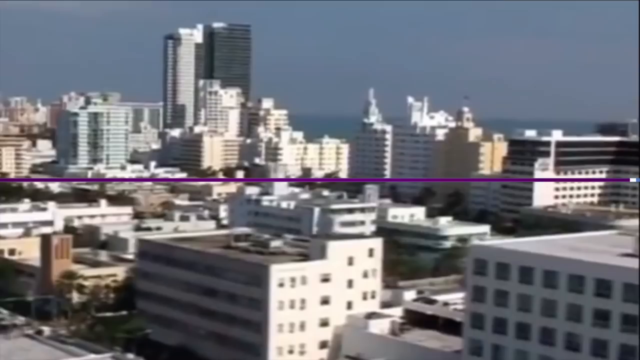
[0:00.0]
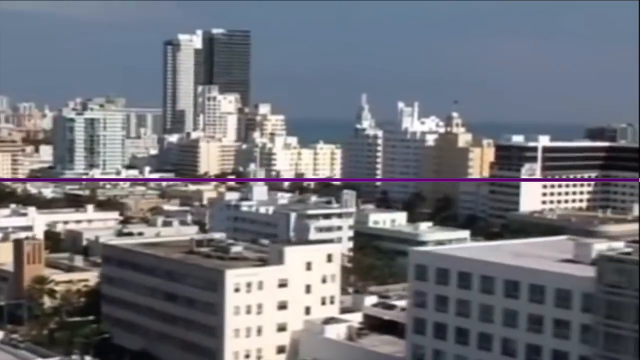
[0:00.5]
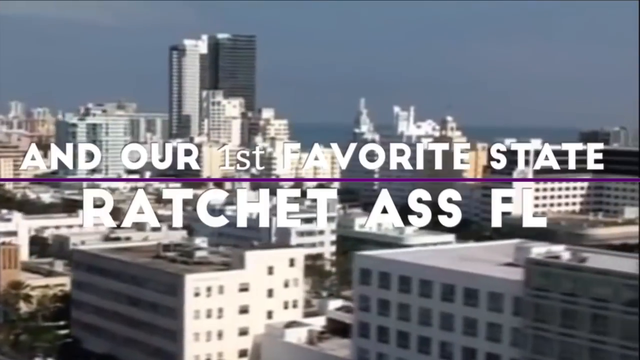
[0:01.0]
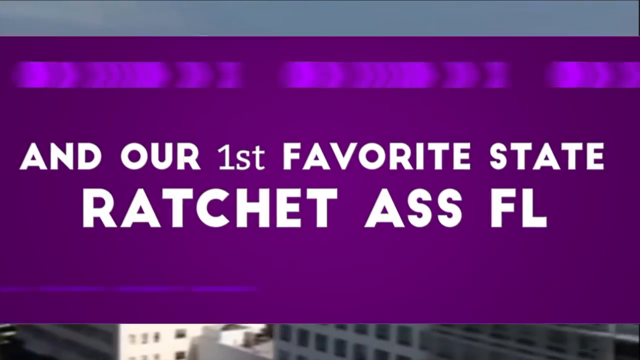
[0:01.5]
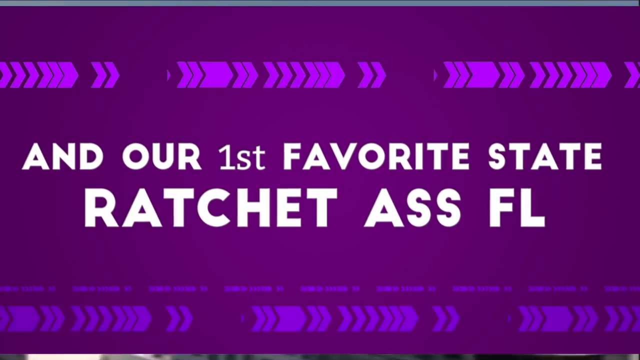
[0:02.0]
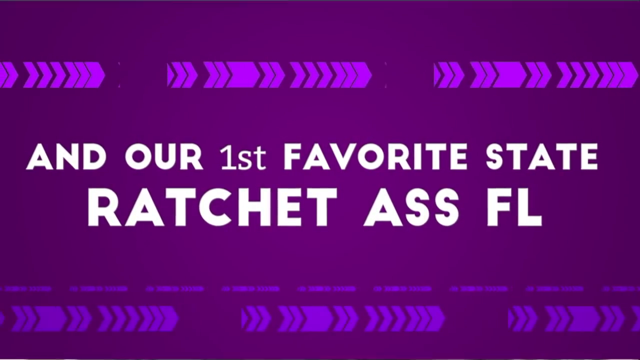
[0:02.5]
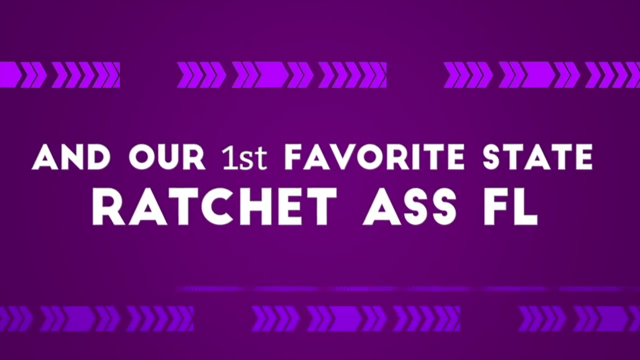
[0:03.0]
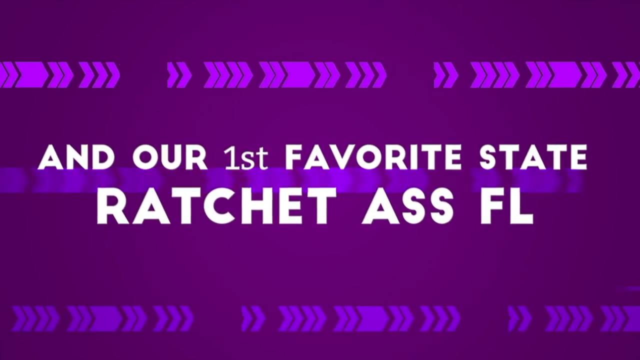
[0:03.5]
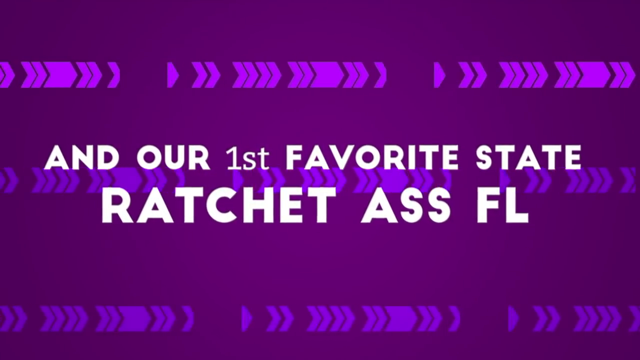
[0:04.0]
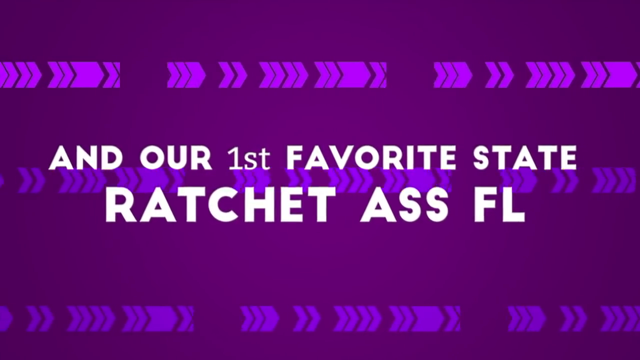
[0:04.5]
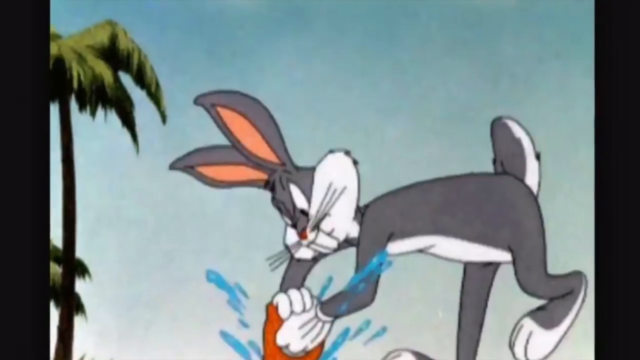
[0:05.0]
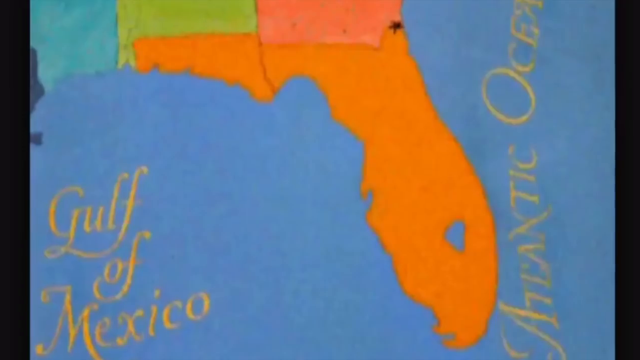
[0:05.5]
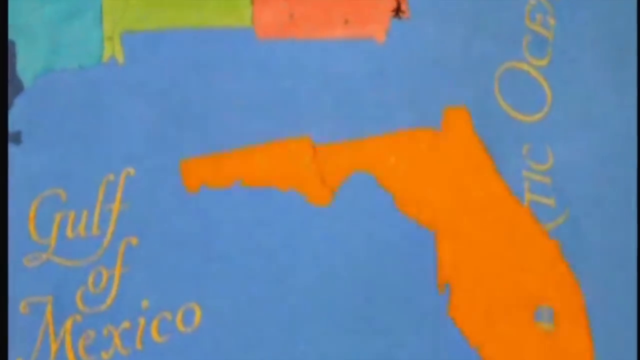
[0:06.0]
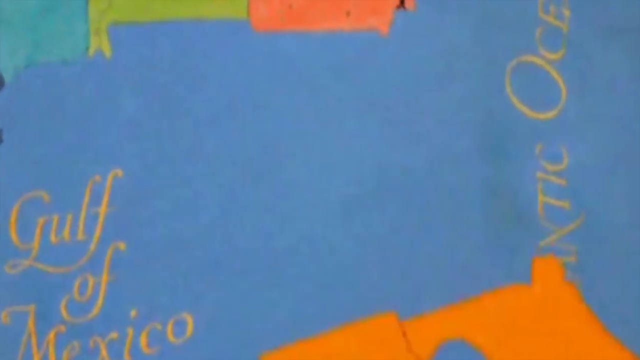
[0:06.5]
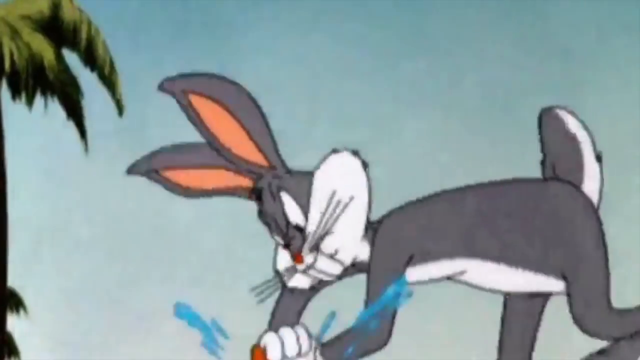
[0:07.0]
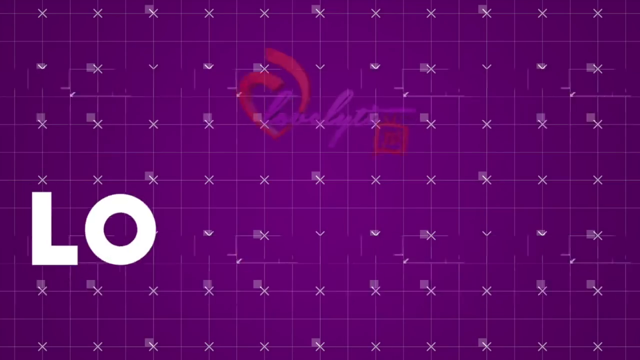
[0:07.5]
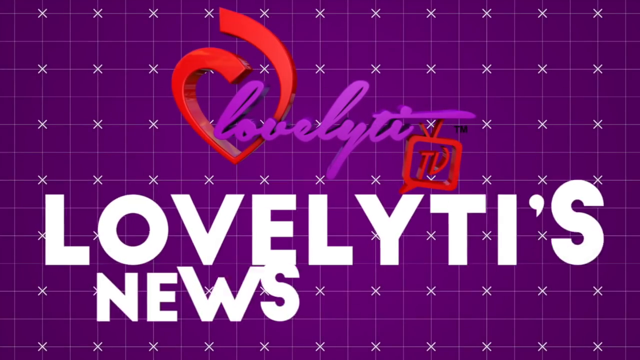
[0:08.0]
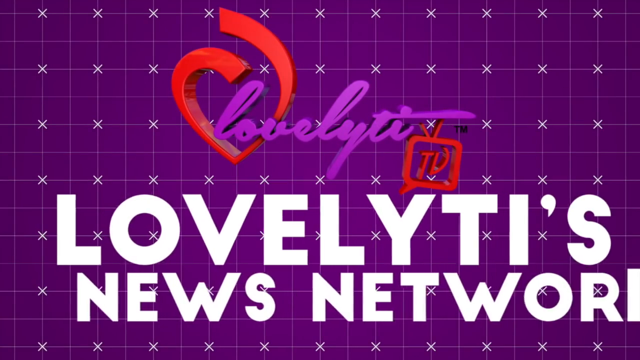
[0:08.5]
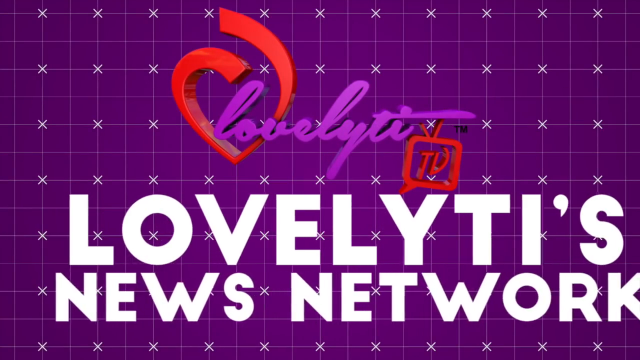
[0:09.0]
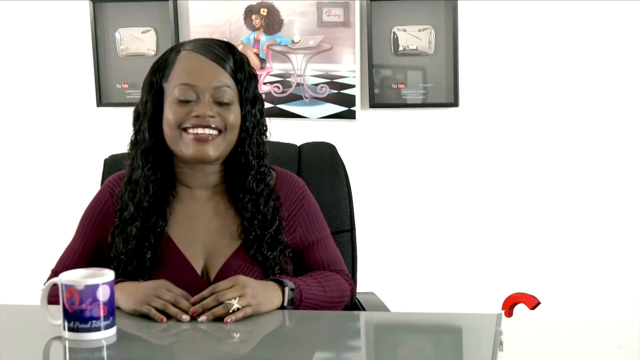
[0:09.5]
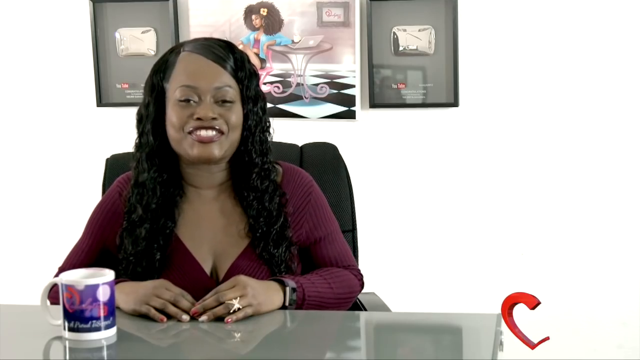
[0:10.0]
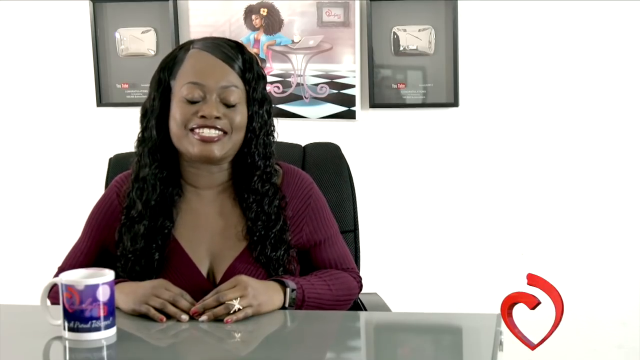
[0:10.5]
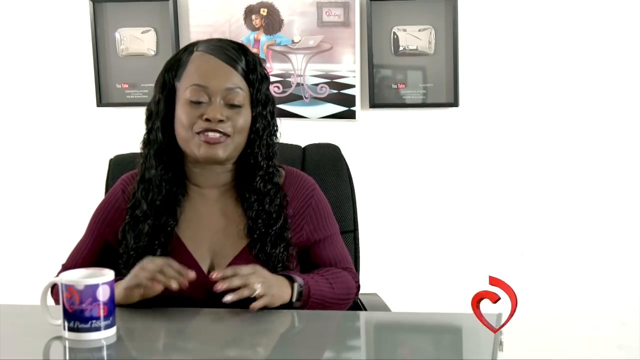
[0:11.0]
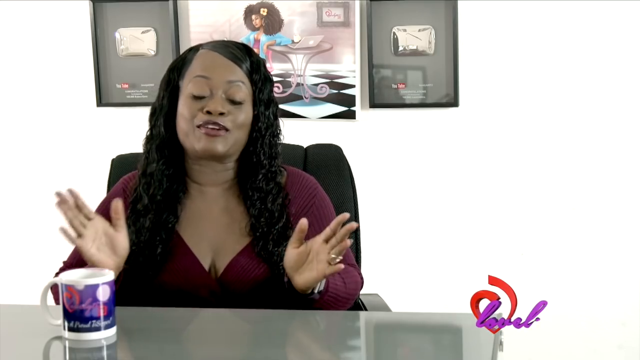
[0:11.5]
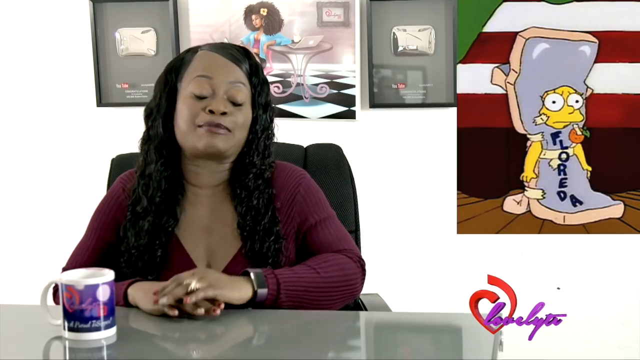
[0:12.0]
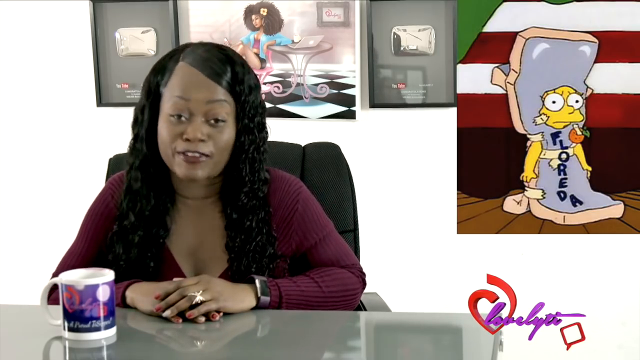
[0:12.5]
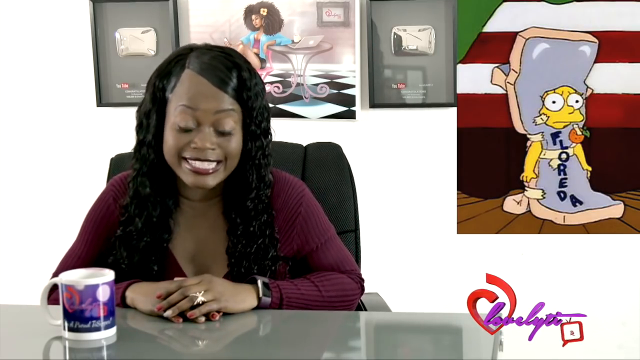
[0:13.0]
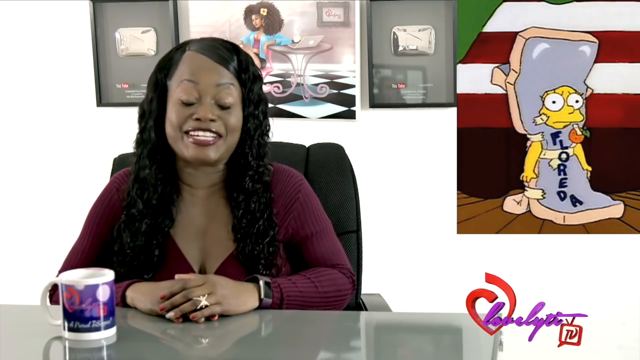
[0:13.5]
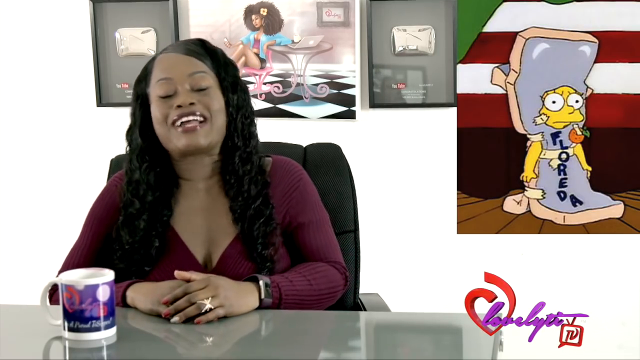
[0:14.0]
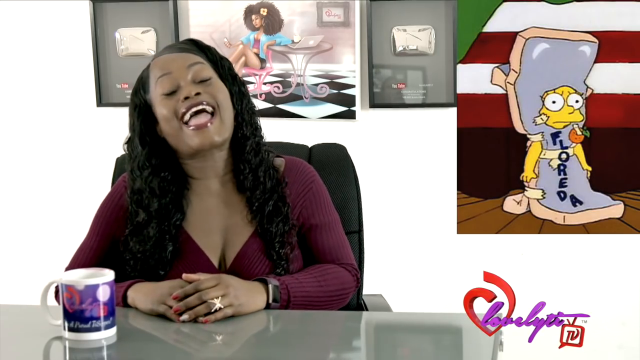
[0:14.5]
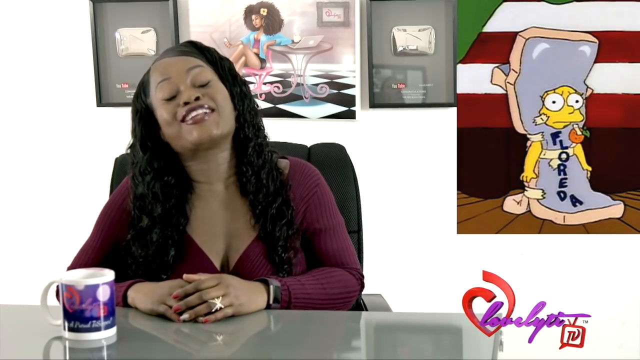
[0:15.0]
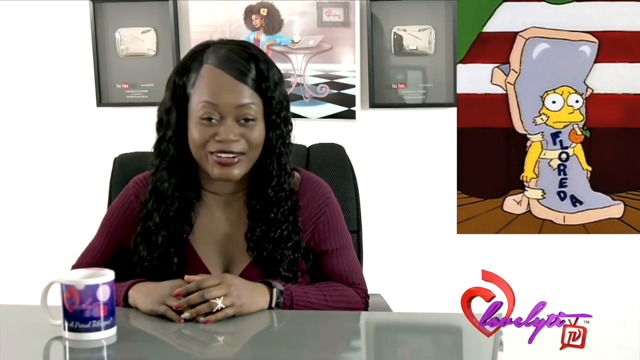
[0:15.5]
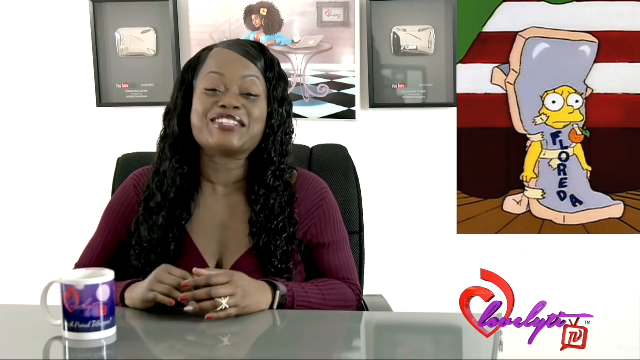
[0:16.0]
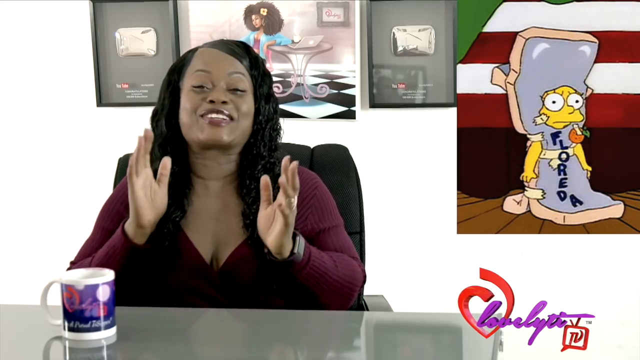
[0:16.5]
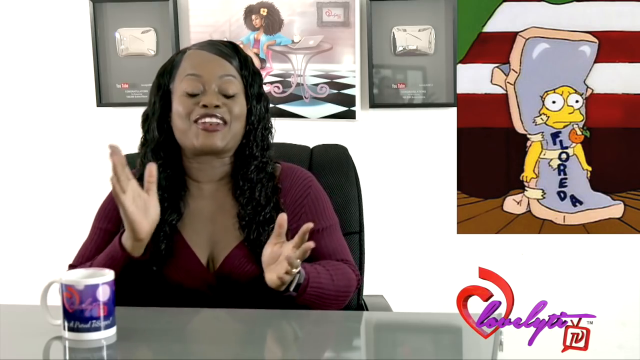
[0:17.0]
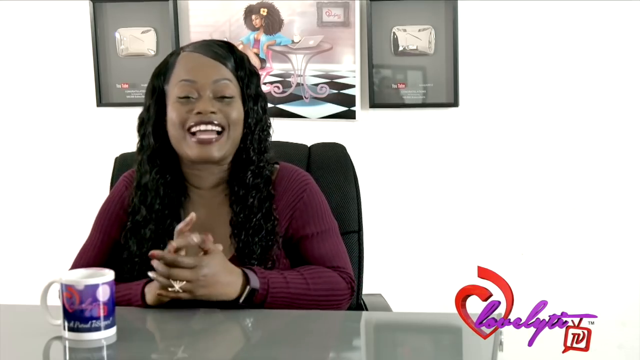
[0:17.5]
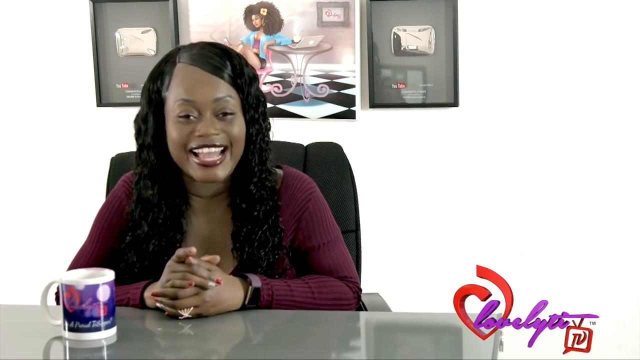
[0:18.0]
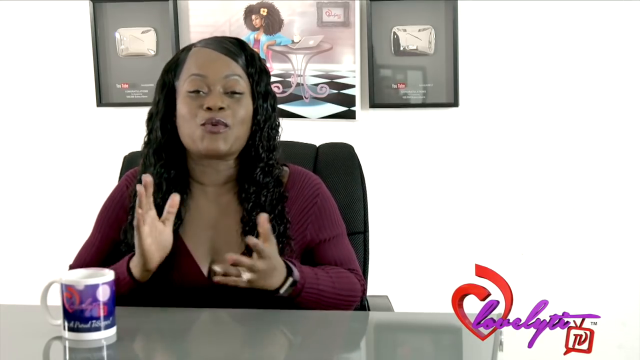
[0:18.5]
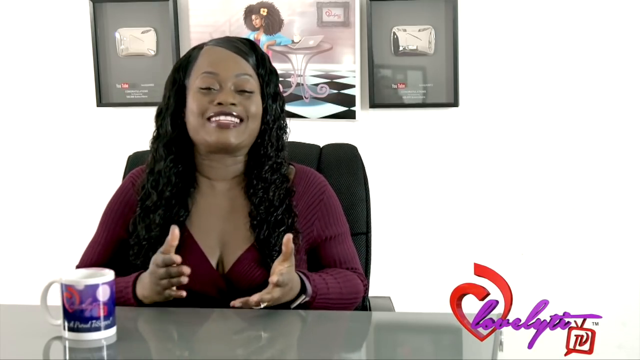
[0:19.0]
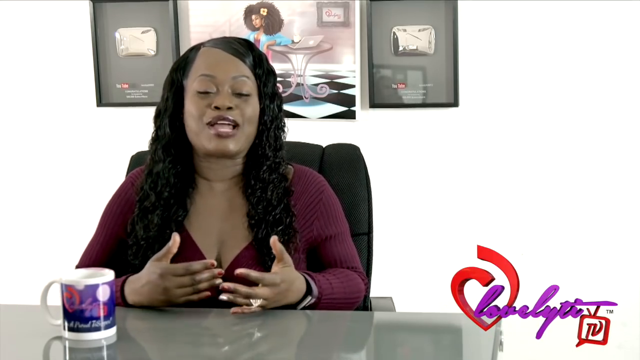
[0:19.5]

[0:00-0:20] An overhead view looks out over a large, bustling city with many buildings, some tall and some small, in various shapes and sizes. The sky in the background looks dark and gloomy, though it is daytime. The view moves constantly to the right. A purple burst of light appears, followed by a purple background with the words "and our first favorite state, Ratchet Ass, Florida" written in white across the screen, while lavender arrows move across it. An image of Bugs Bunny appears briefly; he is bent over, moving some objects, and the image moves very quickly. The view then looks down at a map and zooms in on it, showing the Atlantic Ocean and the Gulf of Mexico. Florida breaks away from the map. Bugs Bunny returns, bent over a tub with some water, apparently washing clothes or possibly his carrots. Next, a woman sits in an office, apparently a YouTube creator making a video for her audience. She sits at a black desk in a black chair with her hands lying on the desk. As she speaks, she raises her hands and gestures, moving them up and down, placing them back on the desk and picking them up again to emphasize her words.